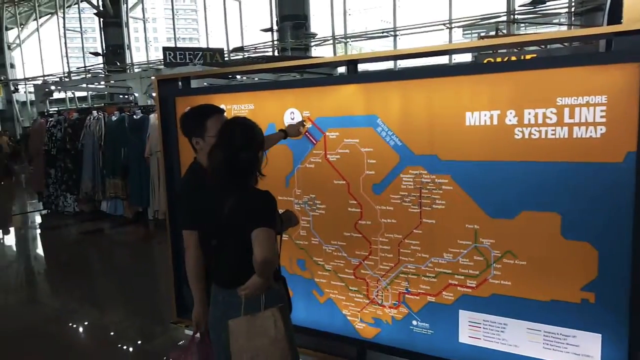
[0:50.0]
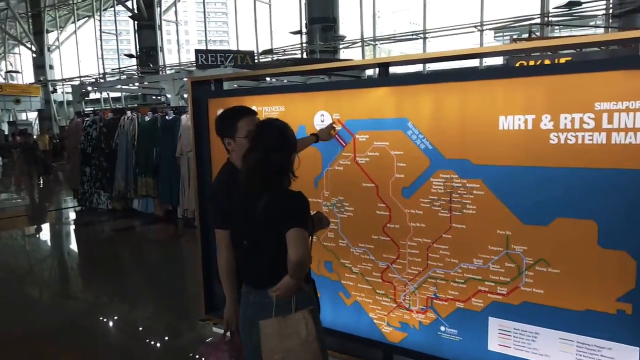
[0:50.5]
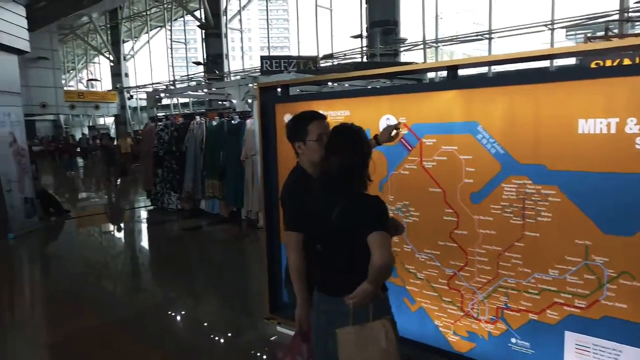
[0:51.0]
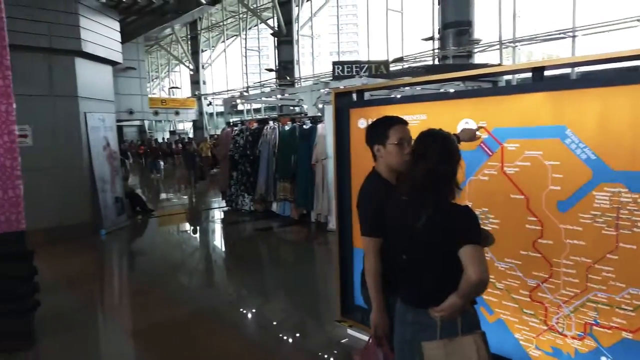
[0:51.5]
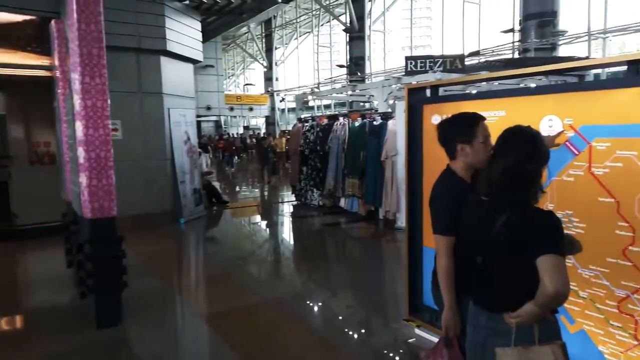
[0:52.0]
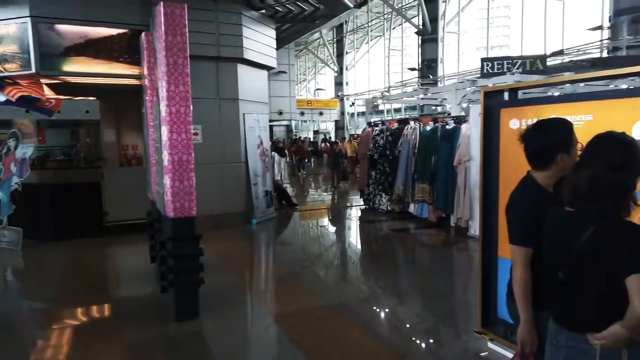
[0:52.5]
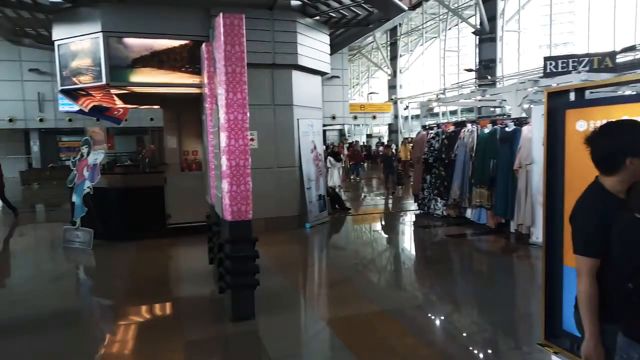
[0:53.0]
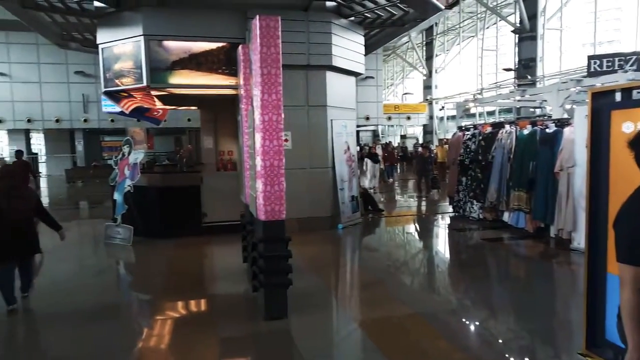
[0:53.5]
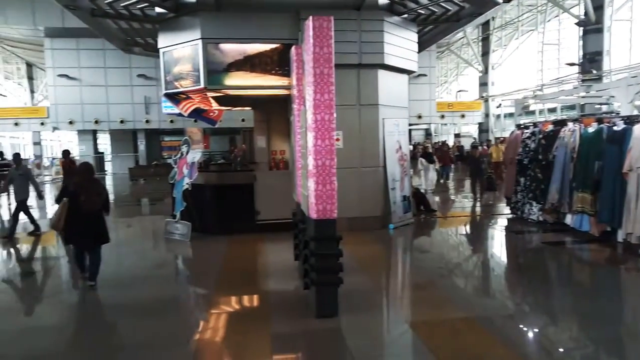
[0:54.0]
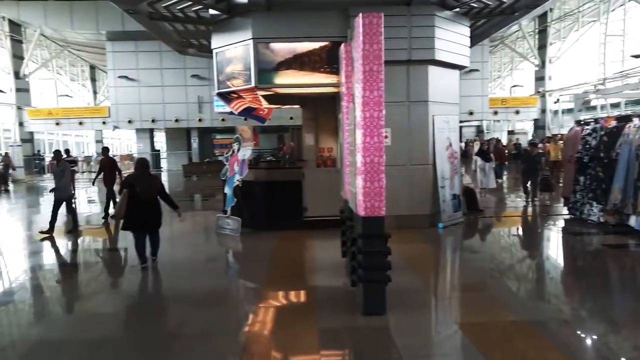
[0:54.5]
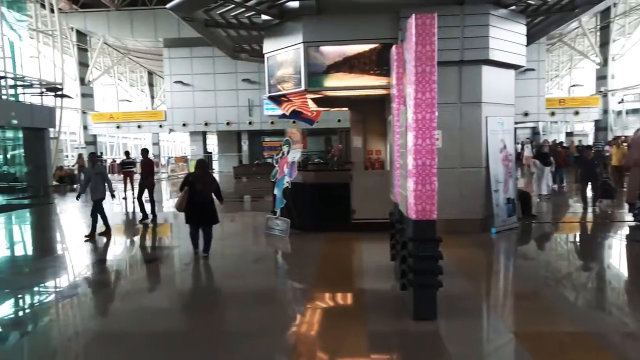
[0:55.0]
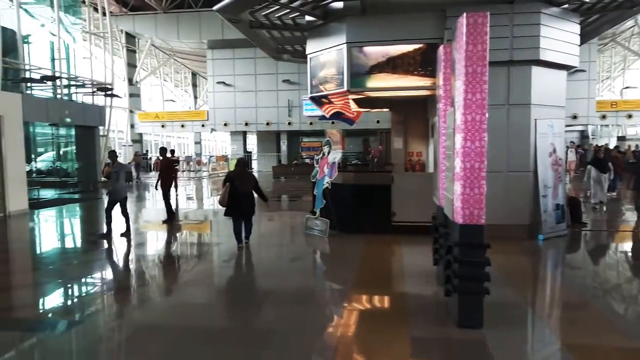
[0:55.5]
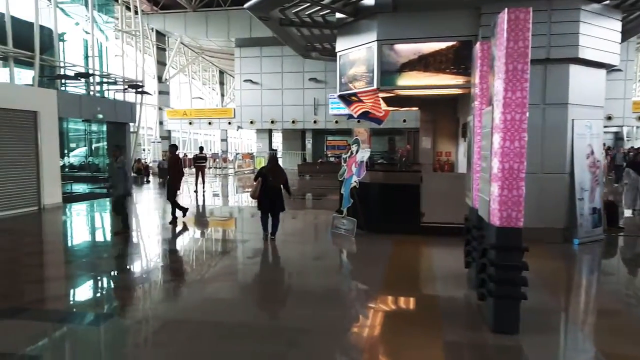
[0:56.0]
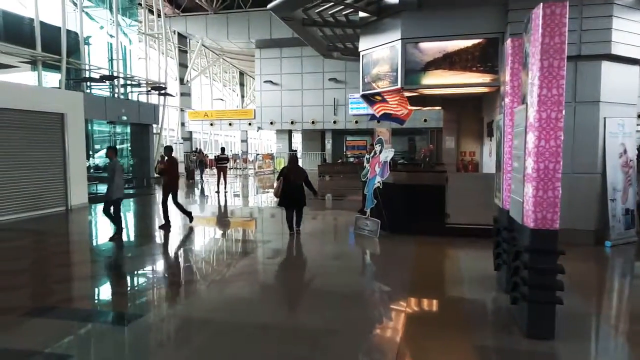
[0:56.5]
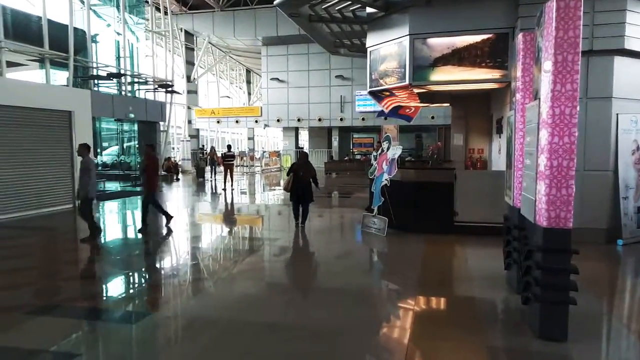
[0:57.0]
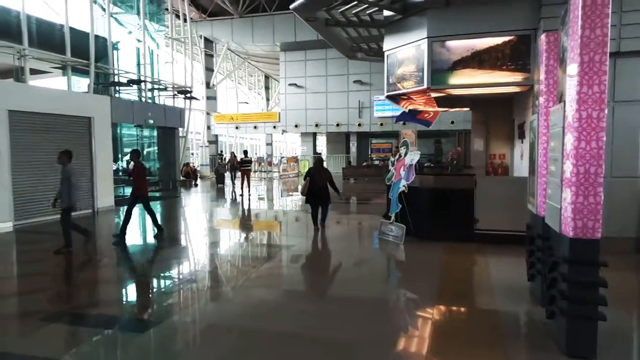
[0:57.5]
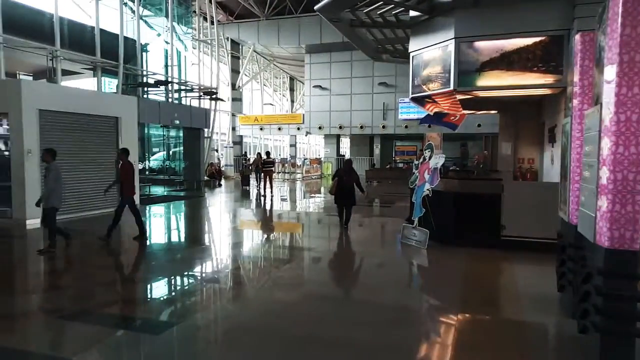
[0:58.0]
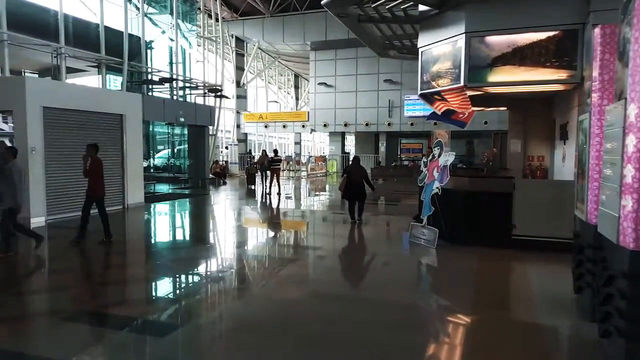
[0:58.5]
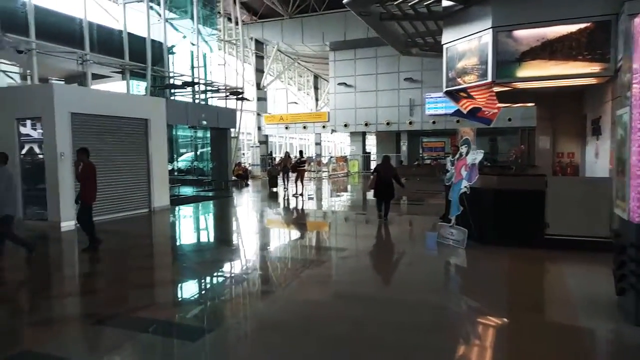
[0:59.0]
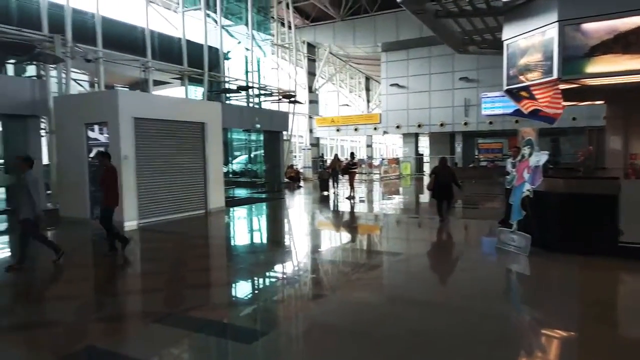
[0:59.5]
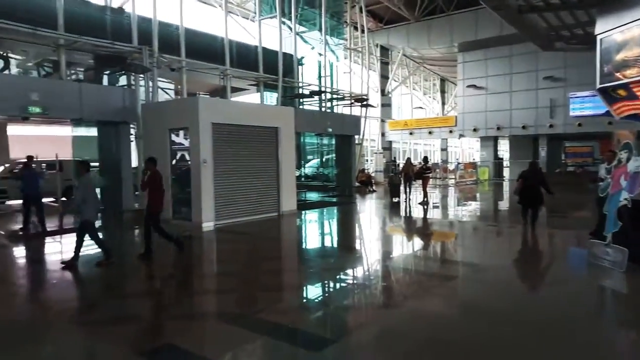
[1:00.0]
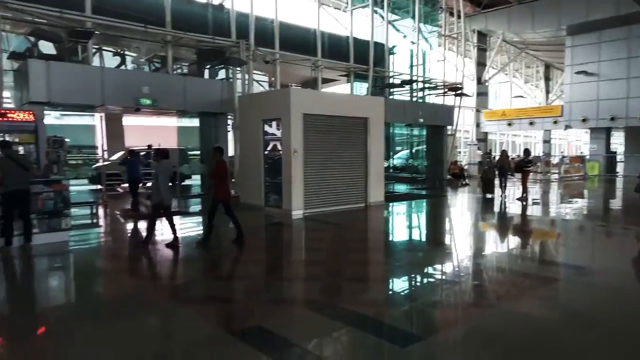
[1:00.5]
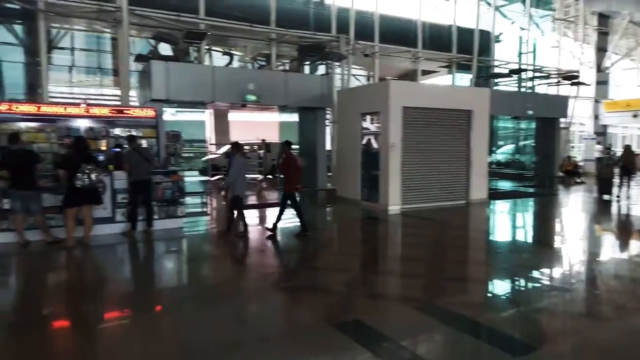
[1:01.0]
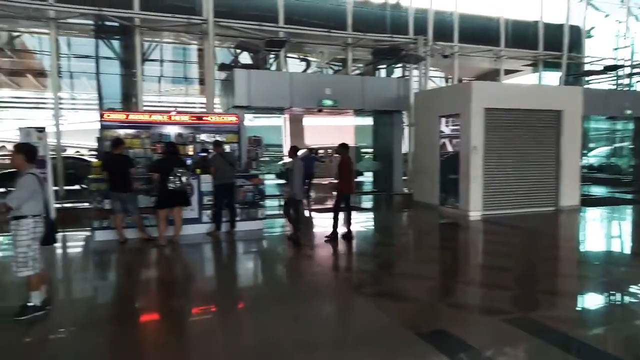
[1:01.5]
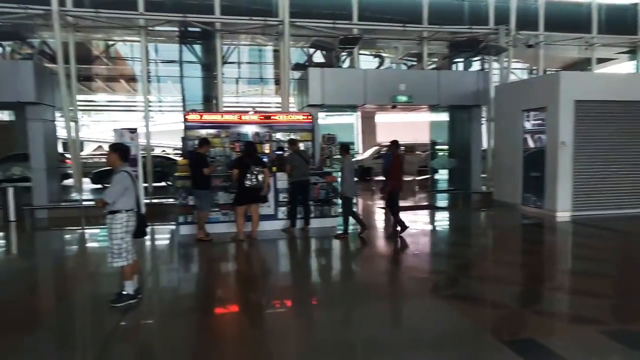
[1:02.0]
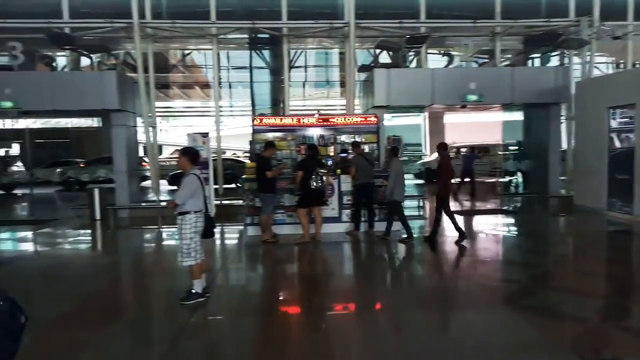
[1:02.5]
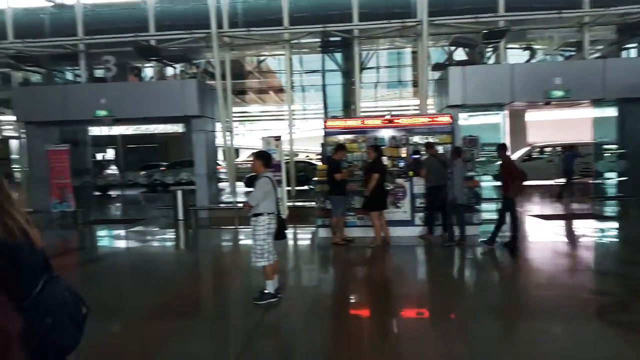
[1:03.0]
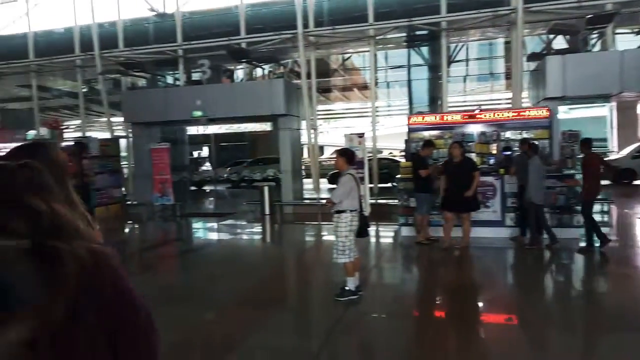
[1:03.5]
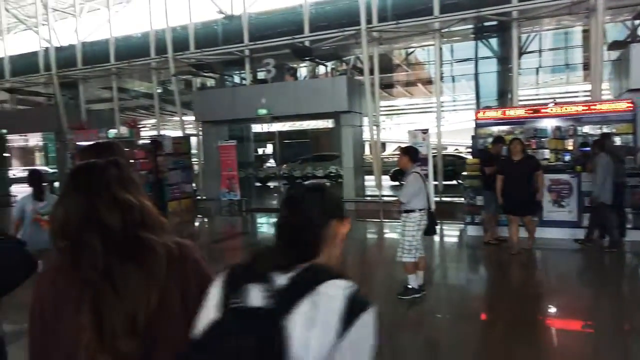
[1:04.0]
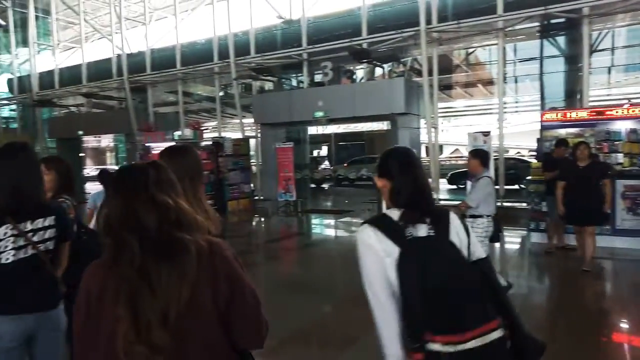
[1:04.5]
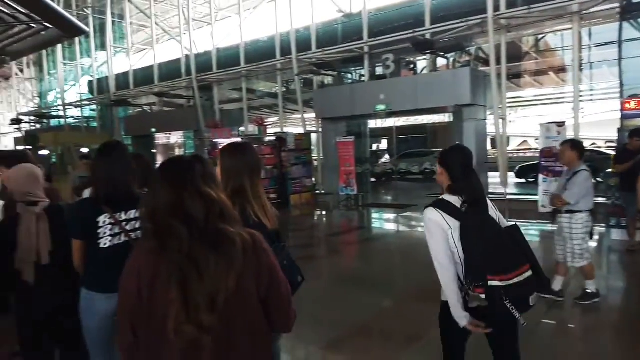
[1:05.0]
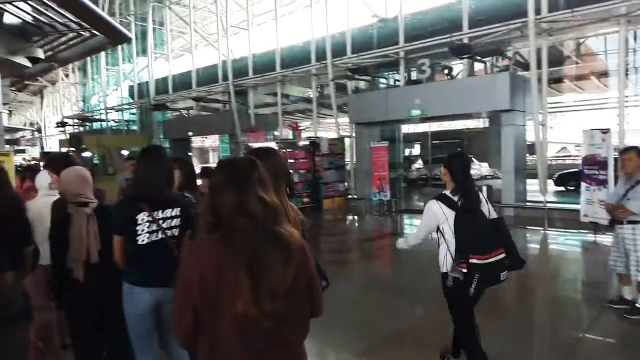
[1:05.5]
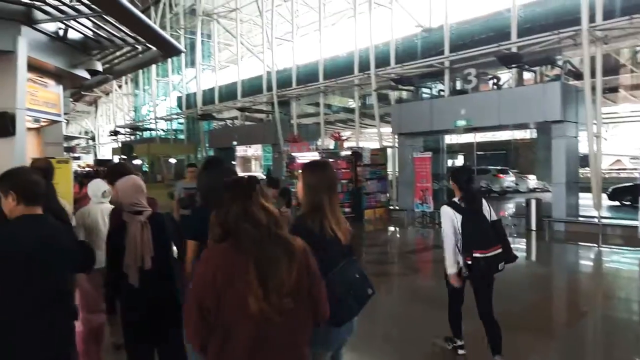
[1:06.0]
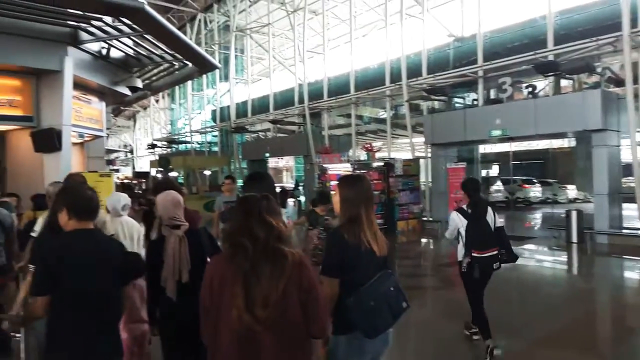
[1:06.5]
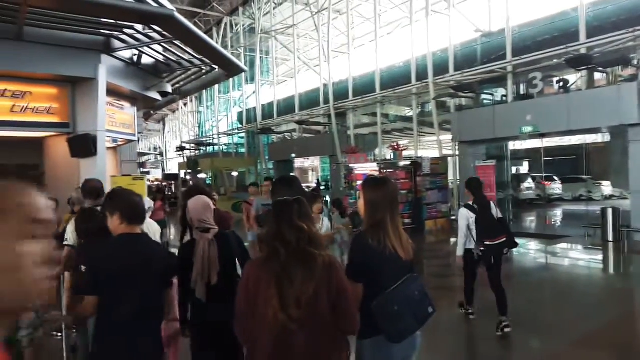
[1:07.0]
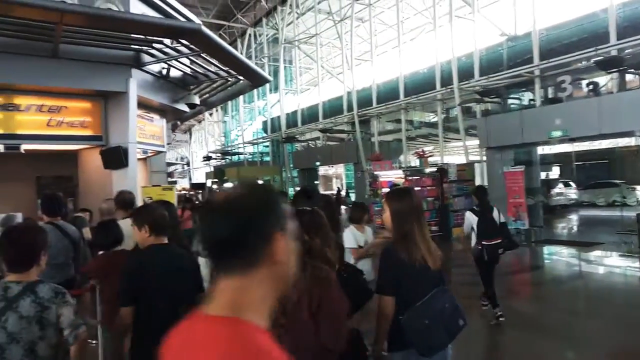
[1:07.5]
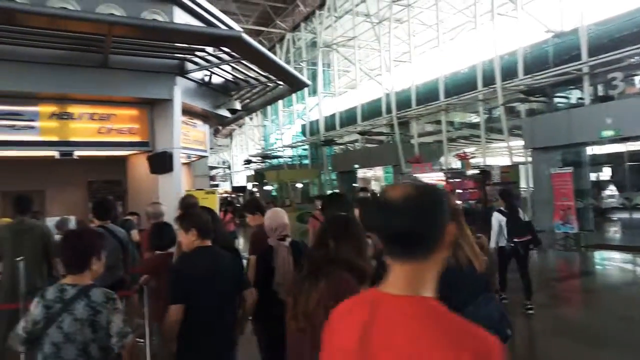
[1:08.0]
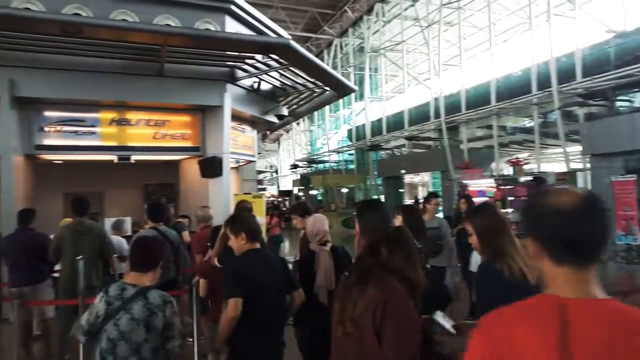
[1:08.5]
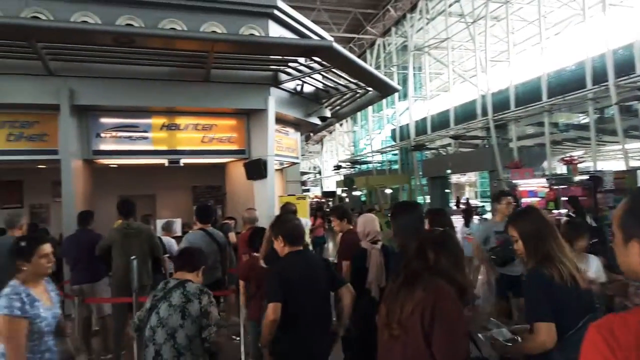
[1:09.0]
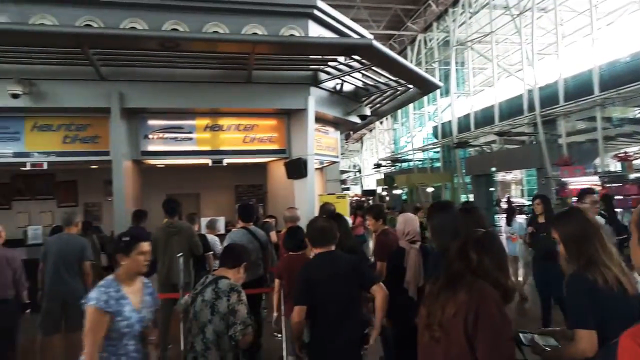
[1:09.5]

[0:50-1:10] Inside a transit station in Singapore, the video rotates around the interior of the transit hub, showing more than several dozen people either walking around carrying luggage and handbags or standing around examining maps or billboards. Many of the people appear to be in a hurry, while some are not. The video then rotates to a ticket station with several lines, where several dozen people queue up to purchase tickets. The lines are demarcated with ropes and barriers to keep people organized as they wait. Many of the people waiting in line have backpacks and bags or are carrying luggage. The video is taken in the daytime, as sunlight can be seen filtering into the building.